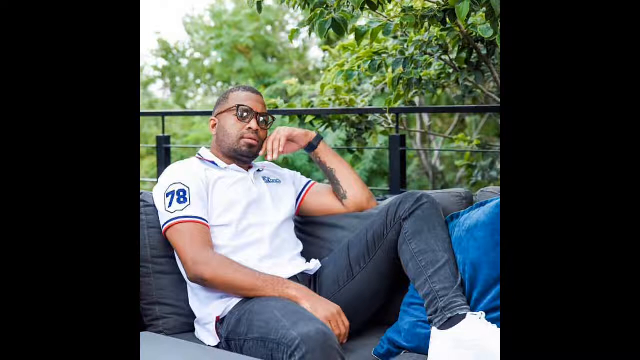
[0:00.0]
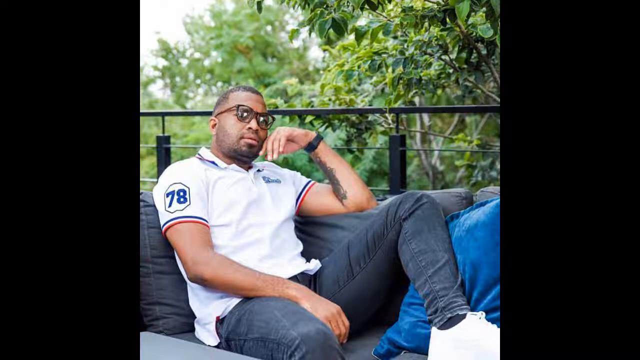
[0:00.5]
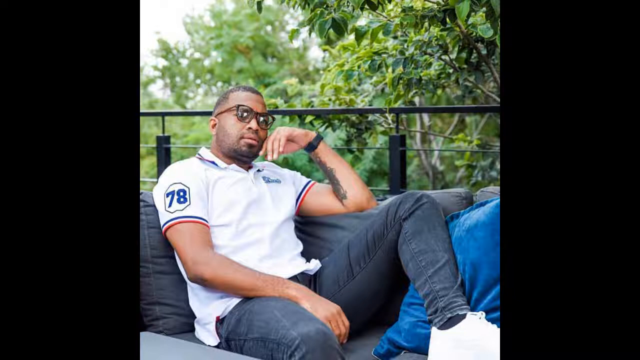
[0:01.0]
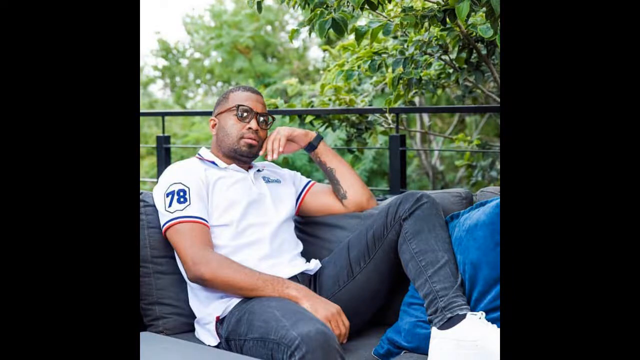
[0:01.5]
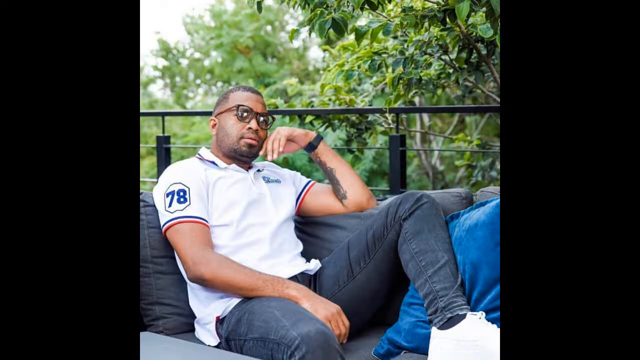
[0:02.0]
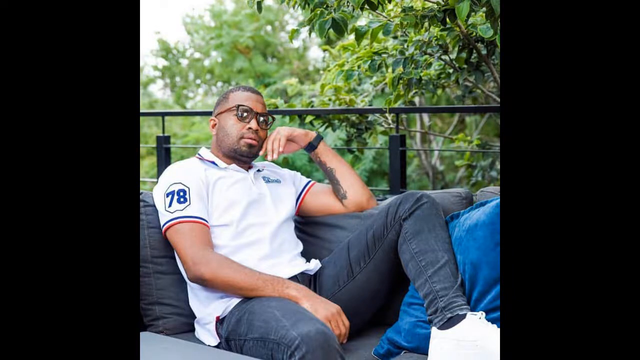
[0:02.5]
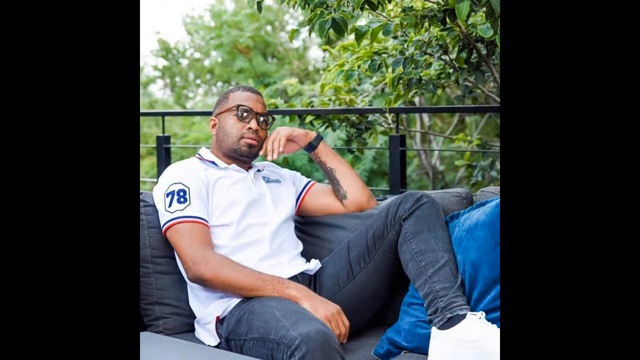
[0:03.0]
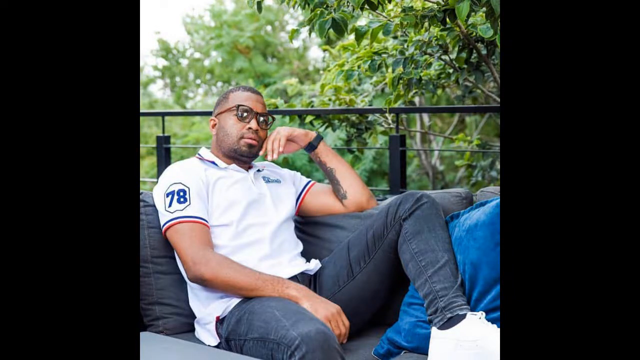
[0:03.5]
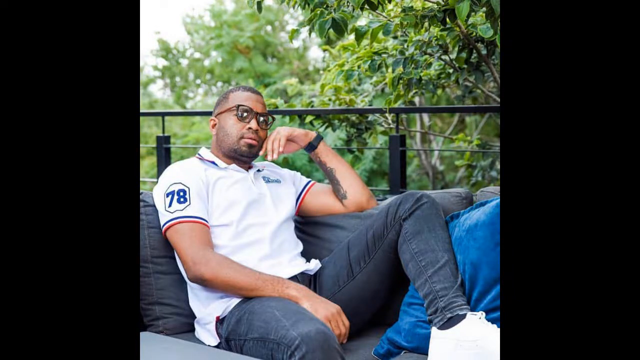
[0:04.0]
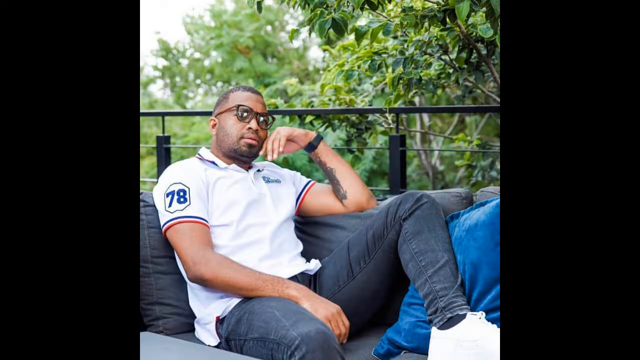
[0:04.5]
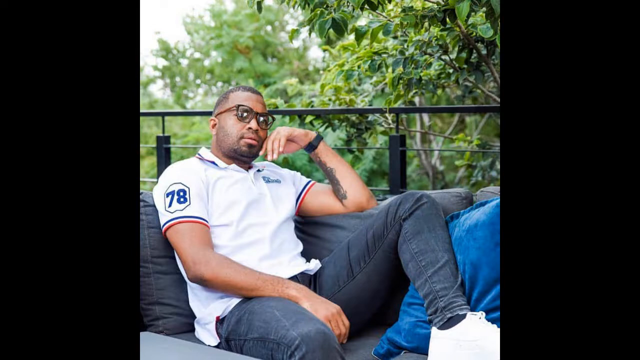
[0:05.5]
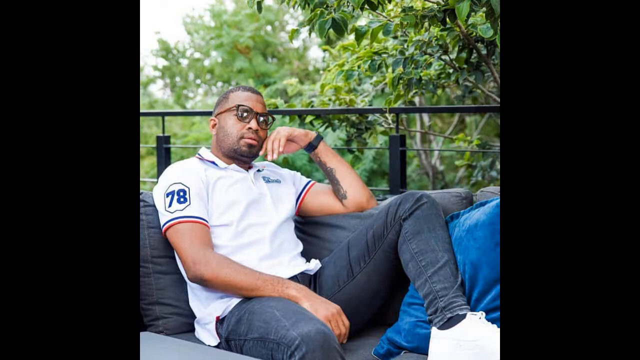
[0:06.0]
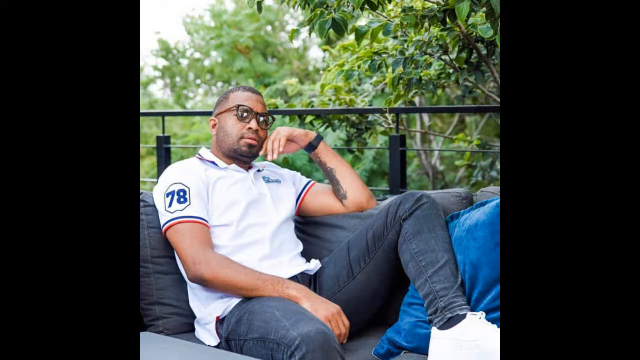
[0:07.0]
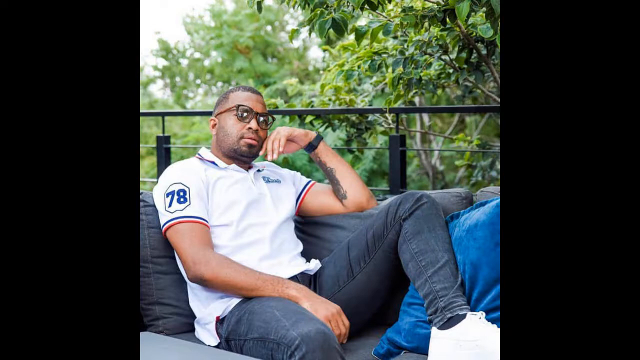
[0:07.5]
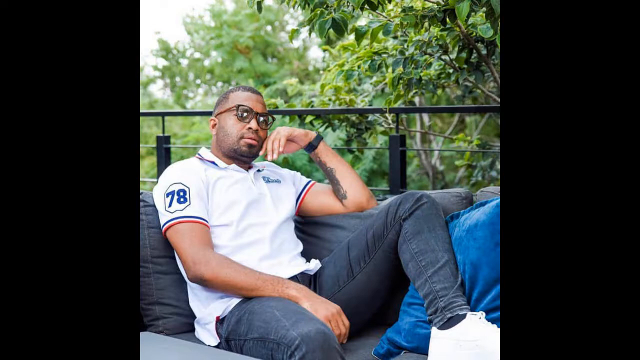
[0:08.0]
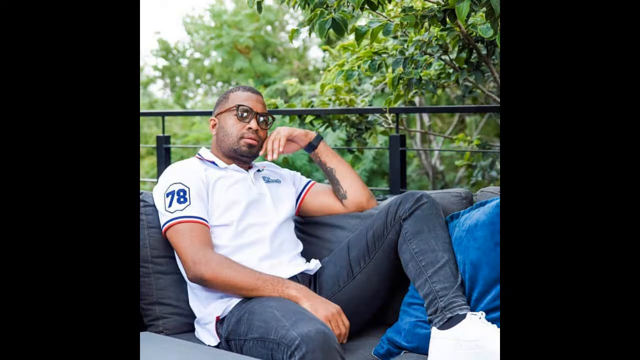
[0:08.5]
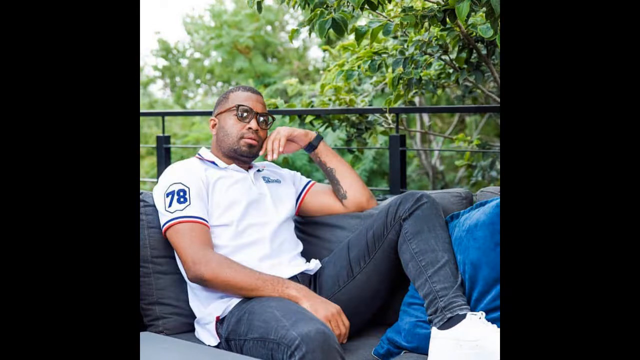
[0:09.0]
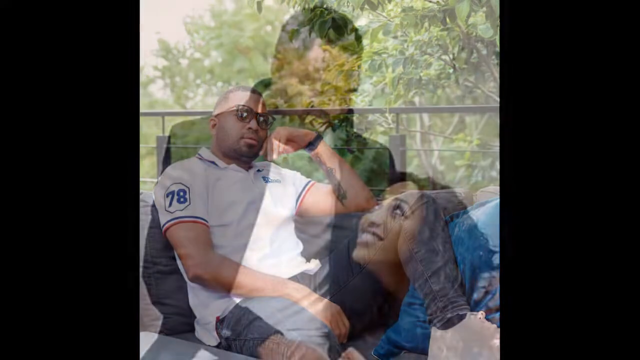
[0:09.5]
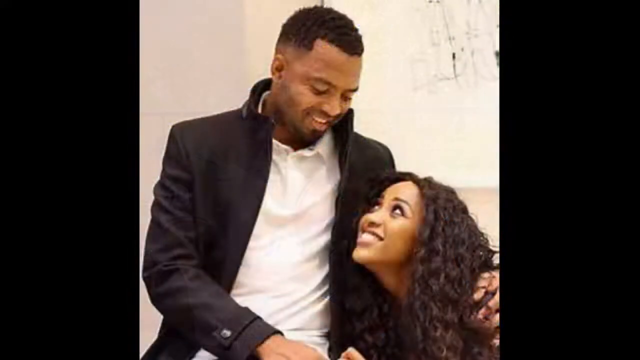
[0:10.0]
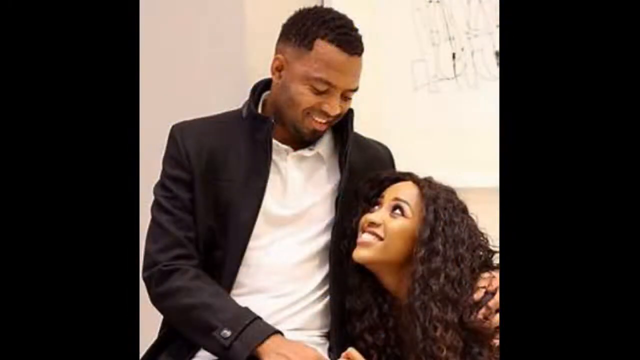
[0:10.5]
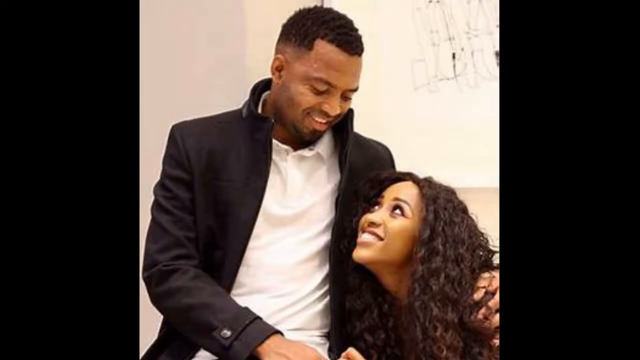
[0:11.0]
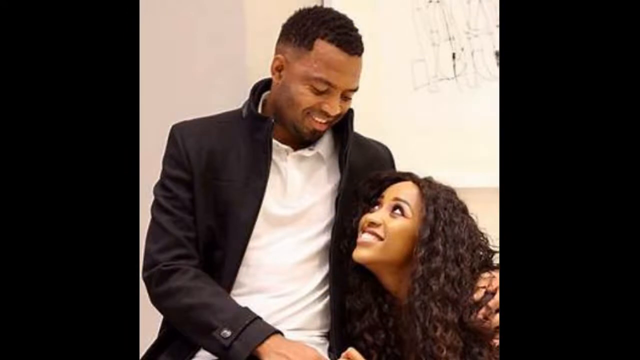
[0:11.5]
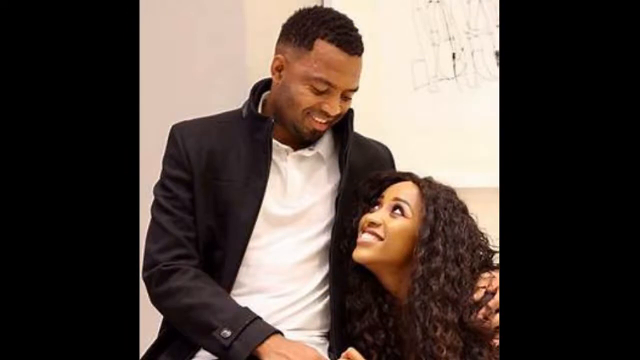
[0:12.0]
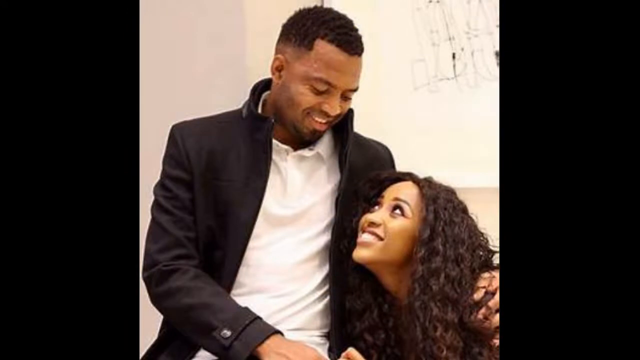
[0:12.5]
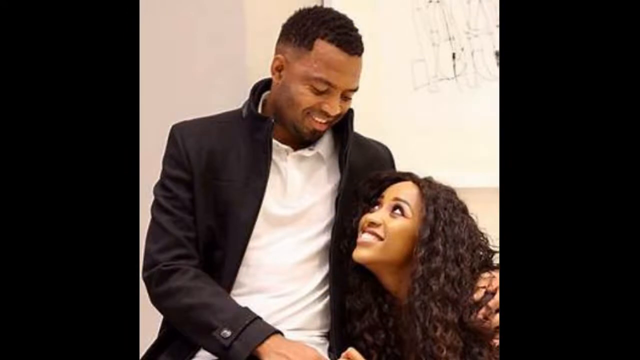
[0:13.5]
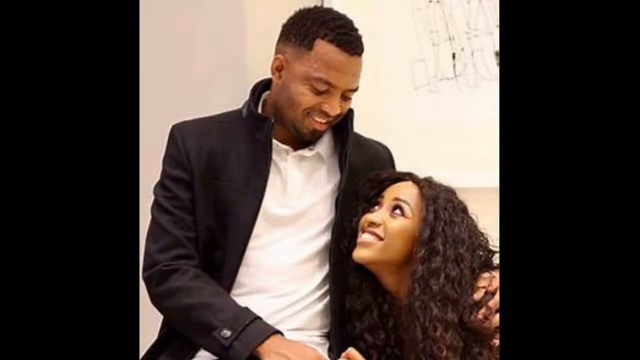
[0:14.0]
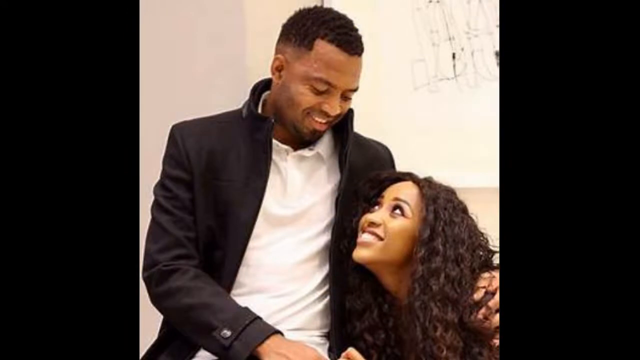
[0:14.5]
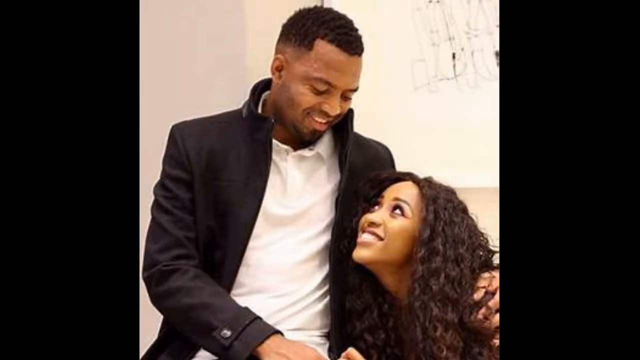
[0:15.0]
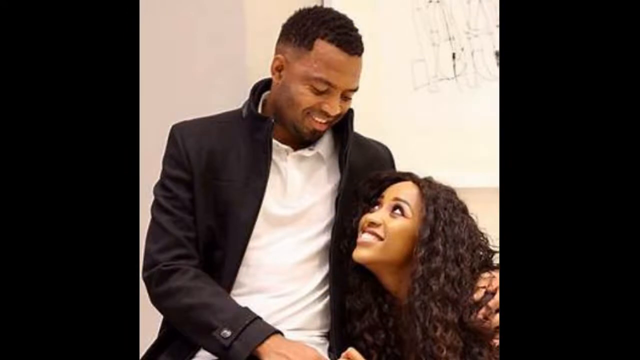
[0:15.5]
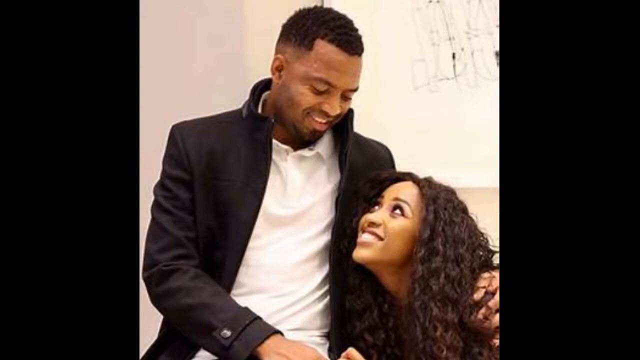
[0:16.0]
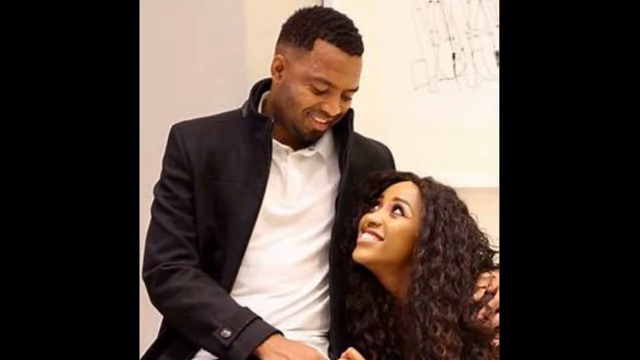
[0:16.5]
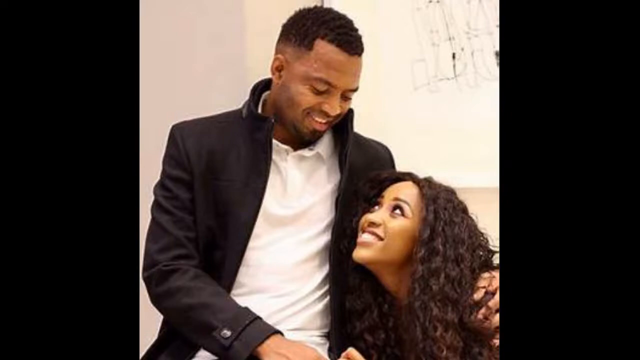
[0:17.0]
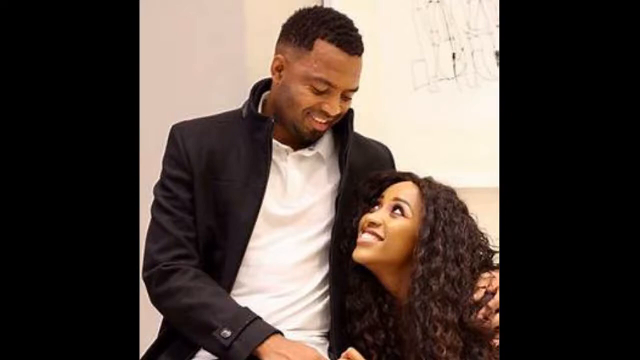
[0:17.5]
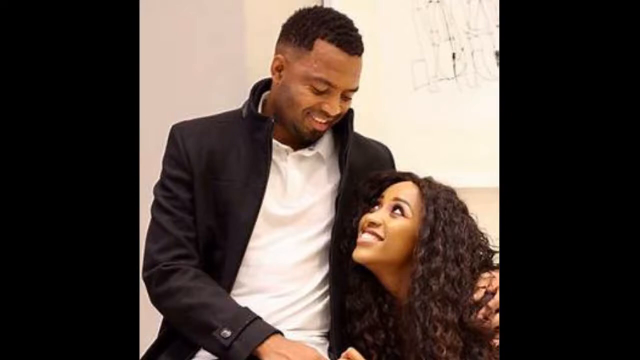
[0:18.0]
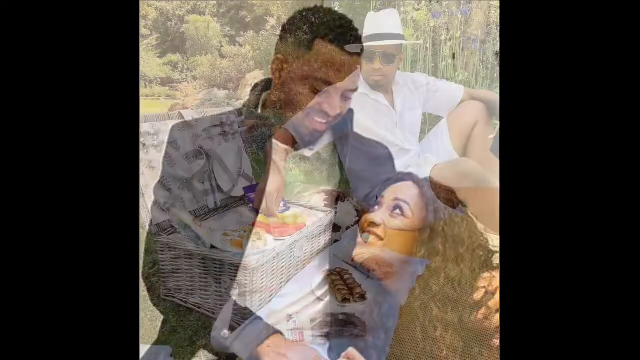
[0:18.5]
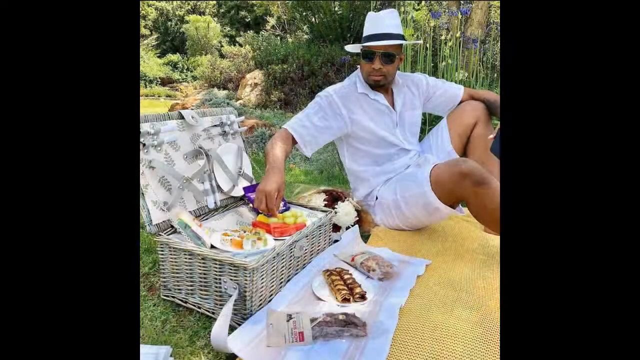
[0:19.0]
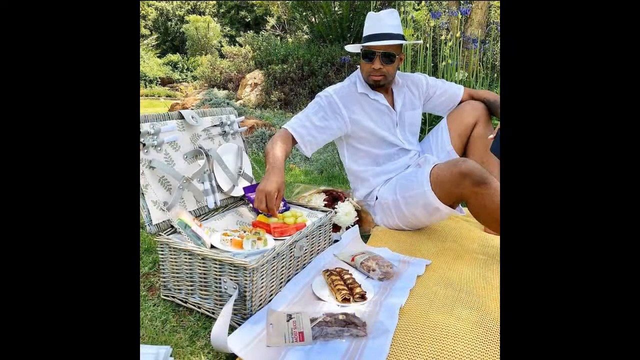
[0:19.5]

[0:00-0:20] A Black, muscular man wears a white t-shirt with red stripes on the arm, white shoes and black jeans. The number 78 is written in blue on the right arm of the t-shirt, which looks like a white golf t-shirt with red and blue stripes. His hair is cut short, he has a short beard, and he wears sunglasses. Behind him is what looks like a park with very green trees that look healthy. He appears to be sitting on a black or navy blue couch, on a sky blue cushion. After him, what looks like a couple appears; they smile at each other and both look very happy. The man wears a white t-shirt and a black jacket.